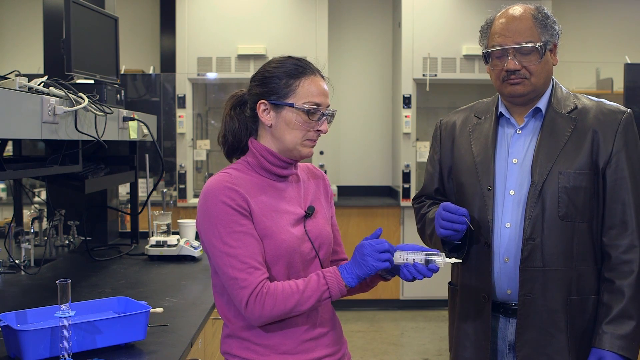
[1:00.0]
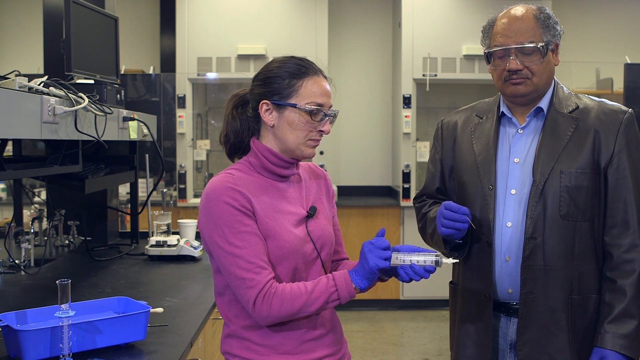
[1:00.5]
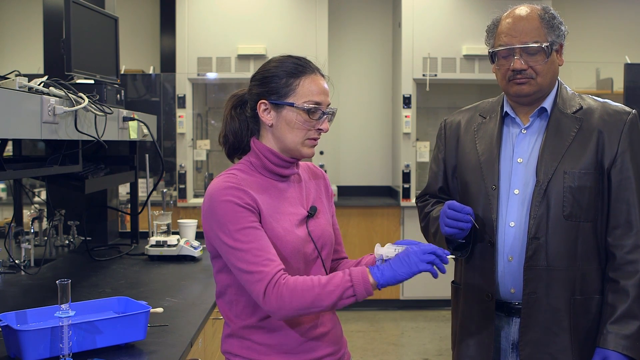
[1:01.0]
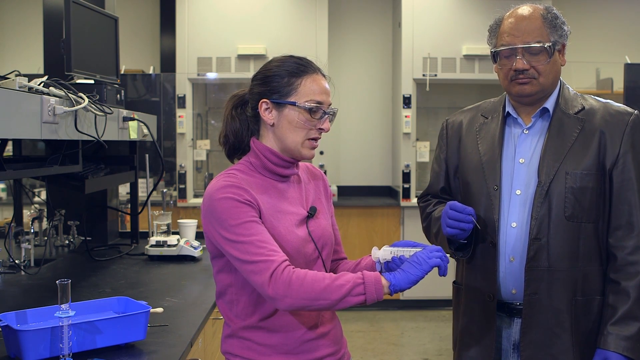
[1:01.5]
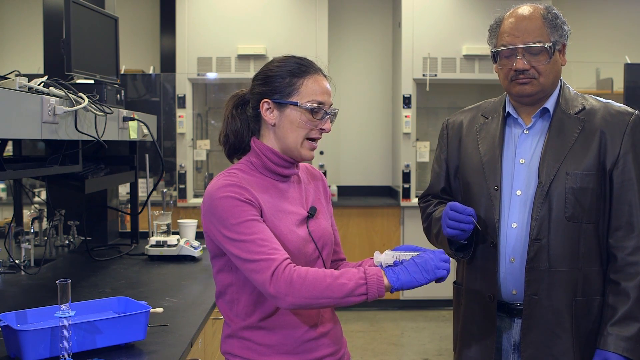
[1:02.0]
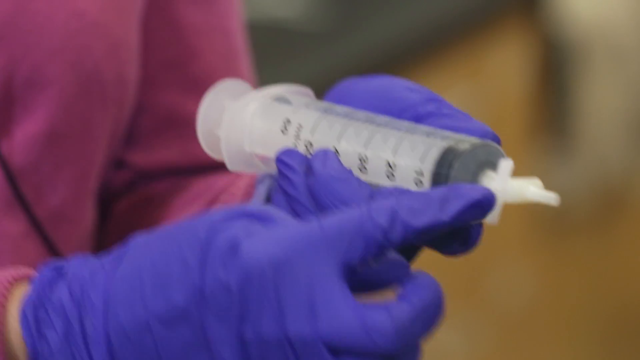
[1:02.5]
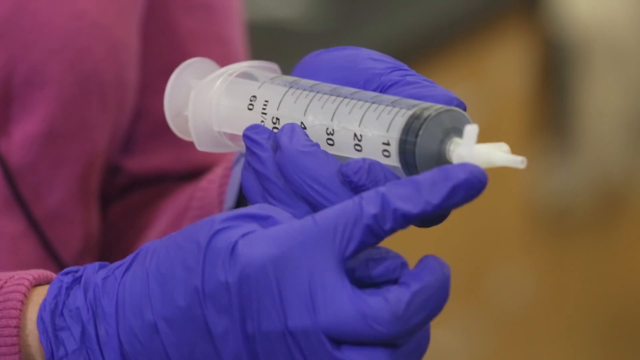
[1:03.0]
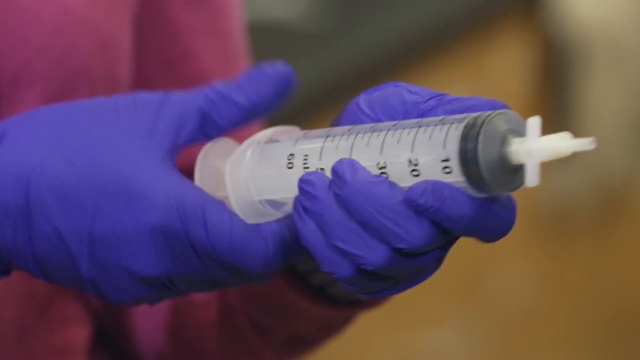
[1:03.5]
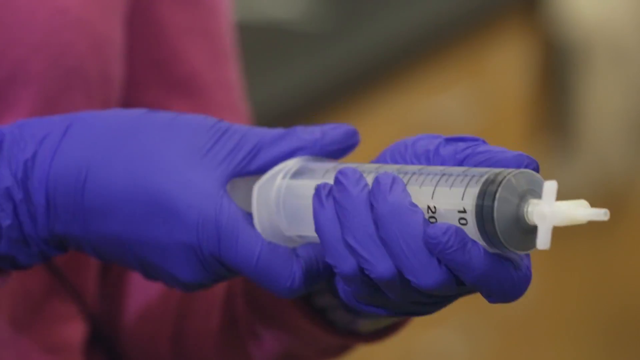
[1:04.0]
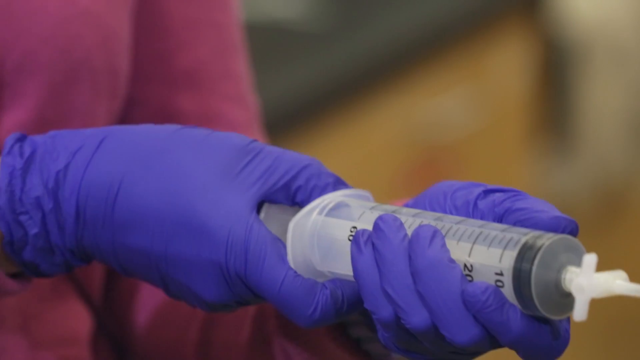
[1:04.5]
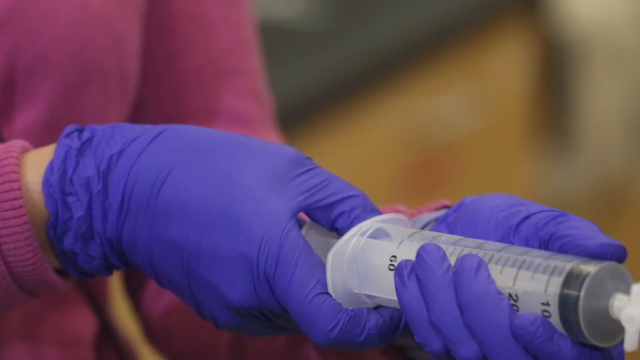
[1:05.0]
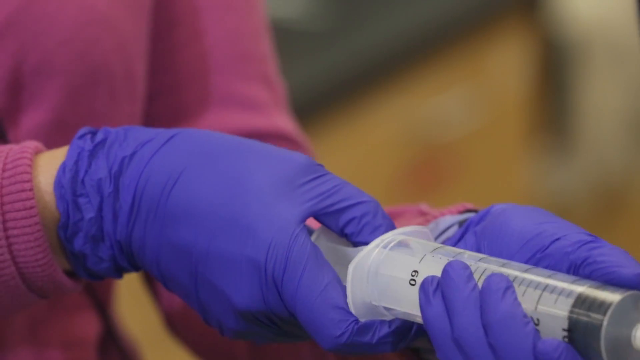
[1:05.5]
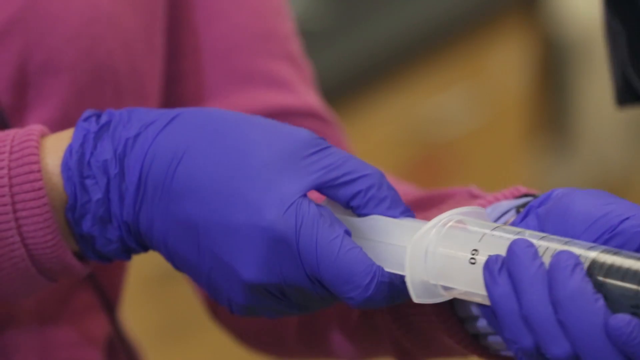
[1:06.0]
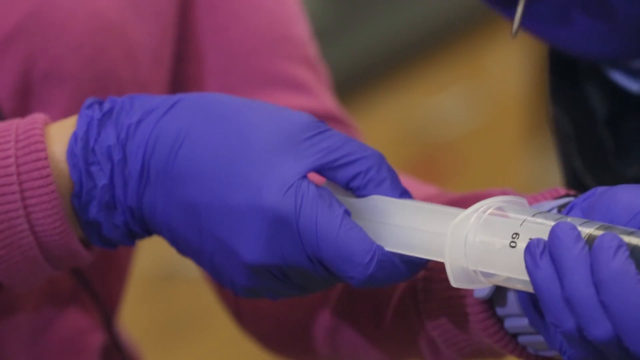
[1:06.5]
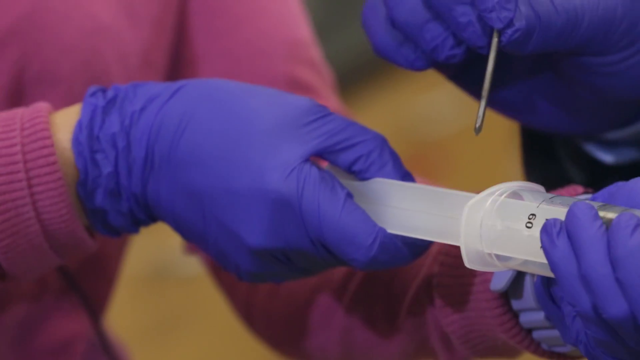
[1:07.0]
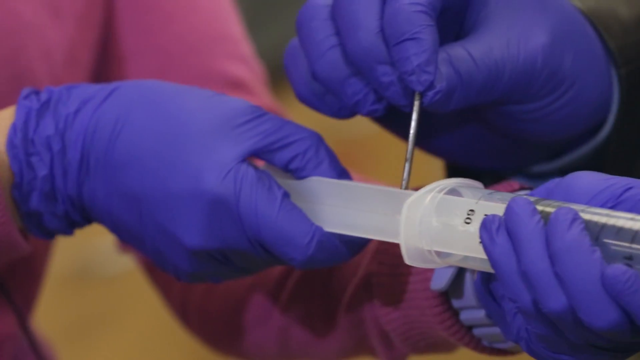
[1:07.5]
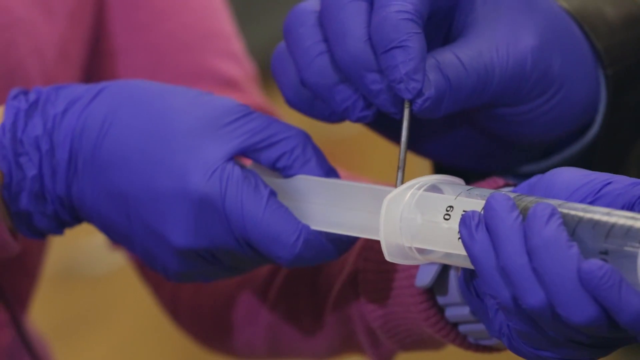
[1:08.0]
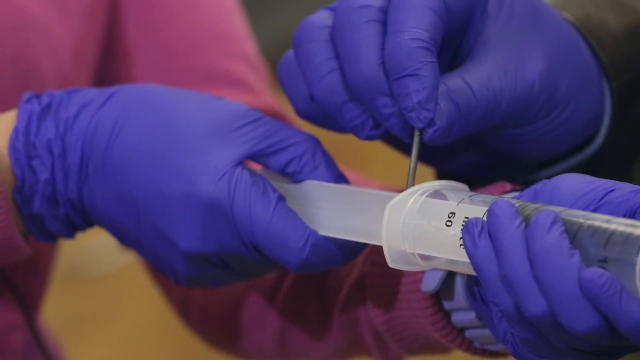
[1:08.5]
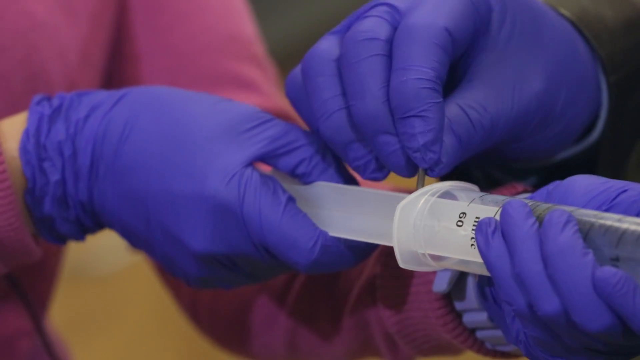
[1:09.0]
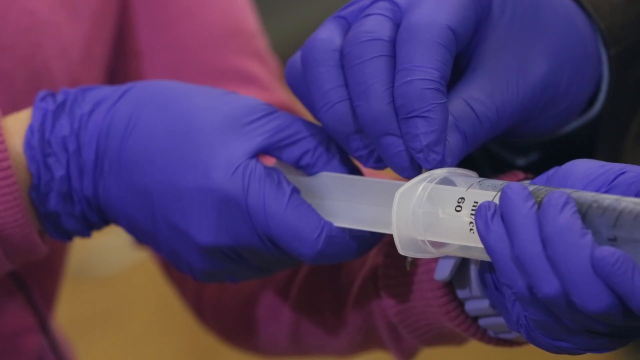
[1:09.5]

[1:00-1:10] The woman continues manipulating the syringe, repeatedly pulling it out. Most of the video is fixed on the syringe itself. In the last couple of seconds, the view is zoomed in on the woman holding the plunger of the syringe pulled out, and the man takes something long and silver and appears to push it into the syringe as she slowly seems to close it. It looks like the man is pushing in a nail, though exactly what it is is unclear.